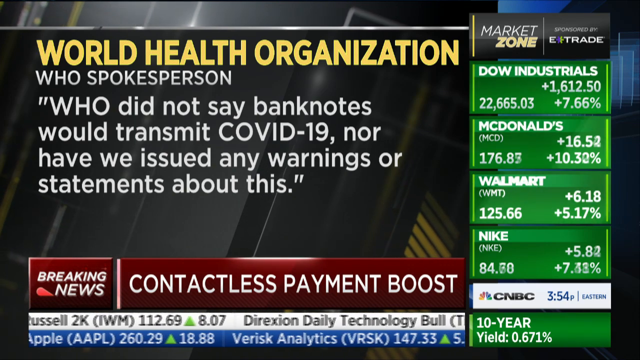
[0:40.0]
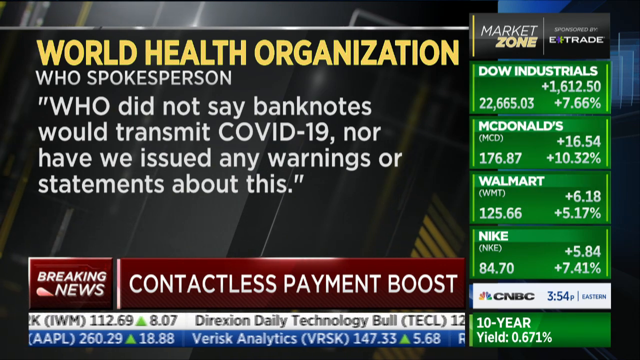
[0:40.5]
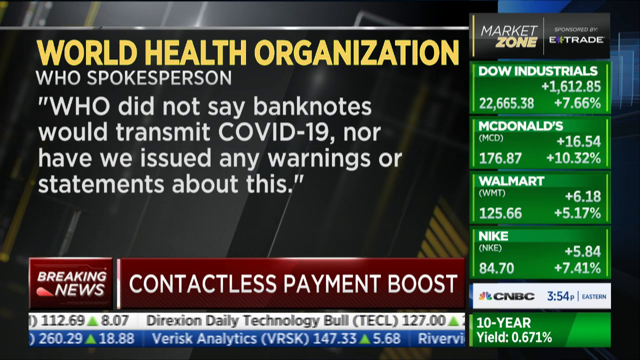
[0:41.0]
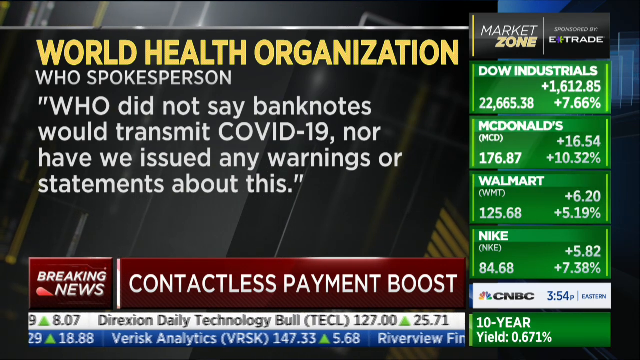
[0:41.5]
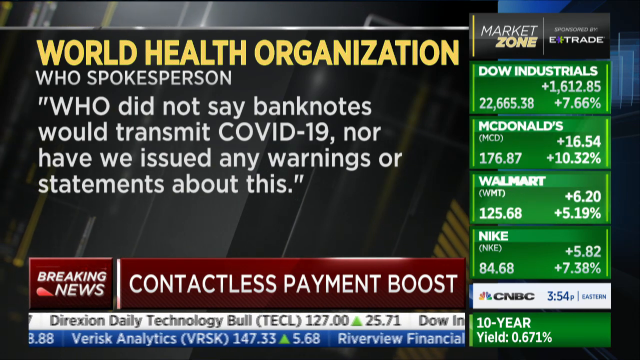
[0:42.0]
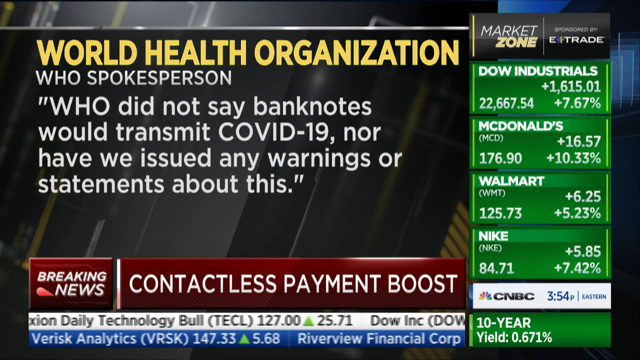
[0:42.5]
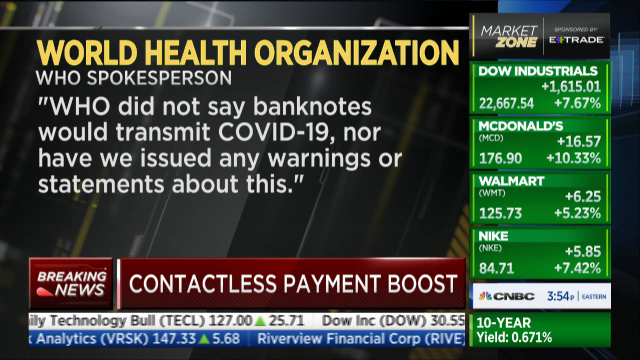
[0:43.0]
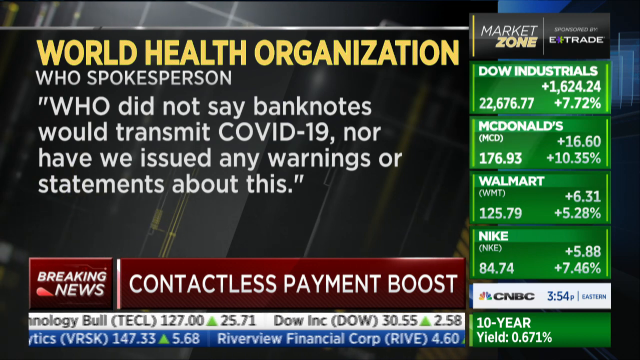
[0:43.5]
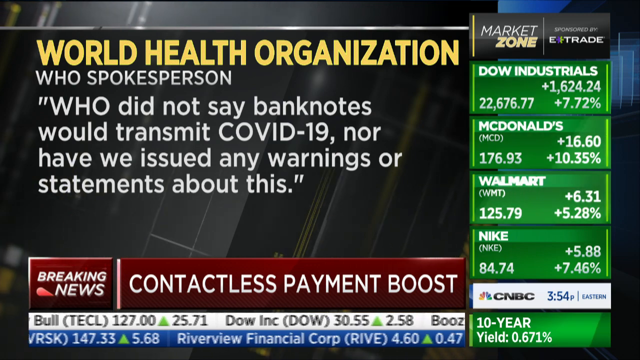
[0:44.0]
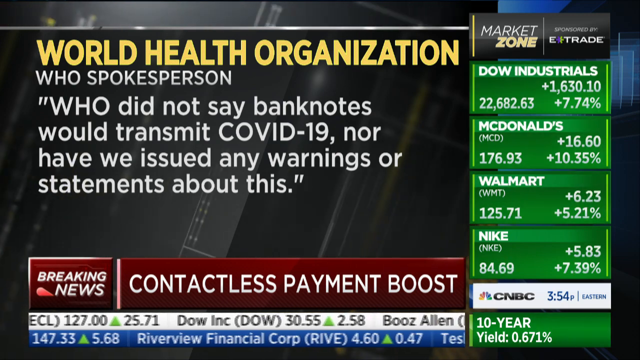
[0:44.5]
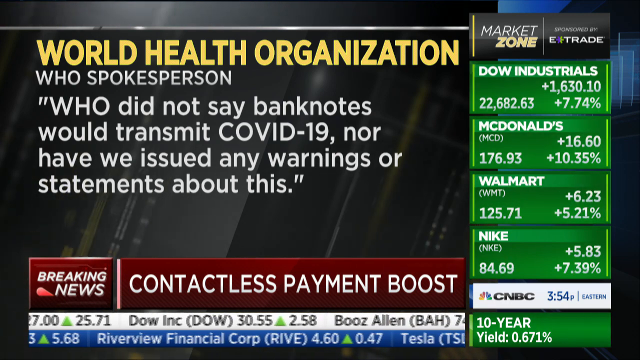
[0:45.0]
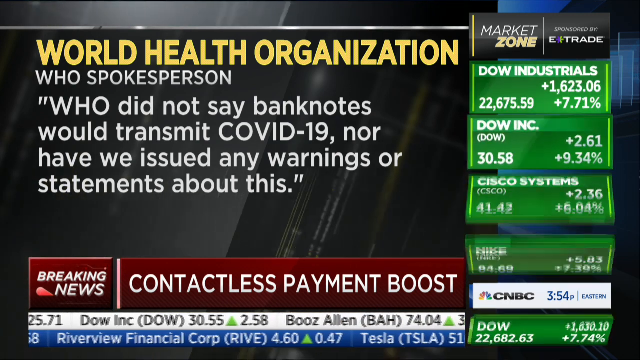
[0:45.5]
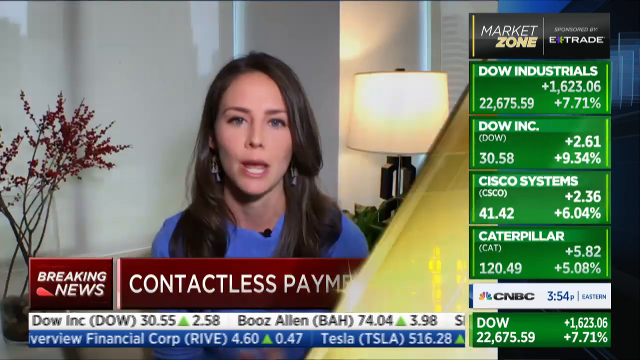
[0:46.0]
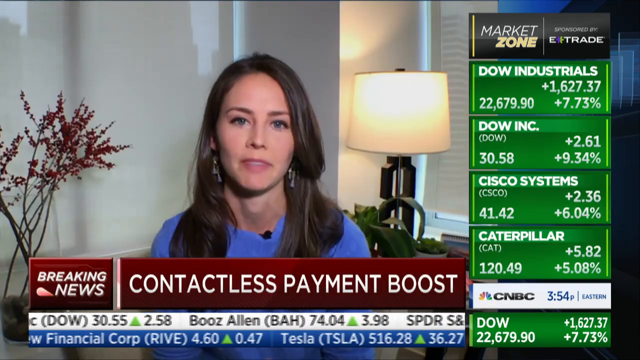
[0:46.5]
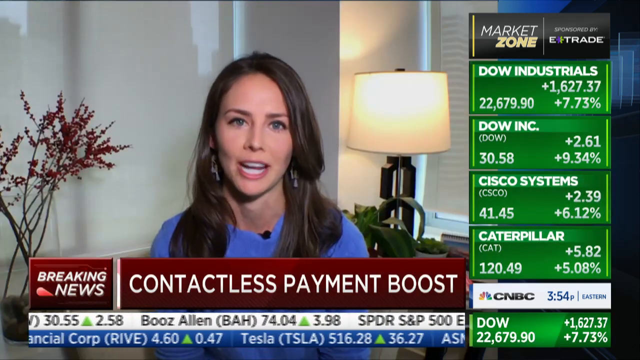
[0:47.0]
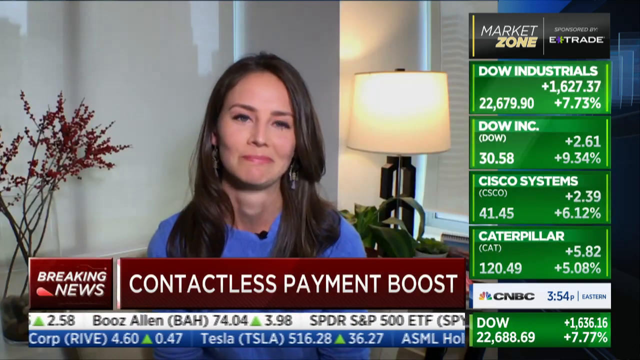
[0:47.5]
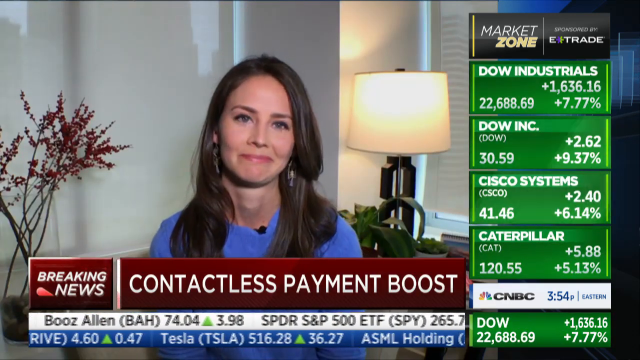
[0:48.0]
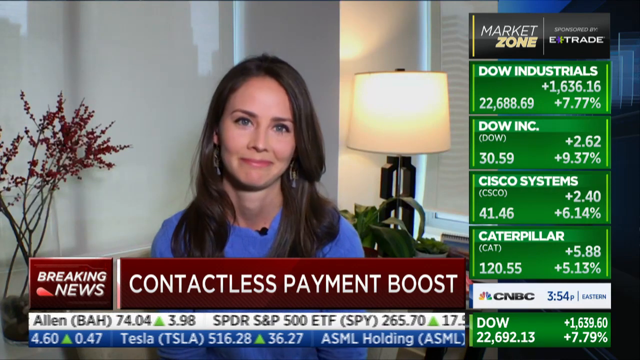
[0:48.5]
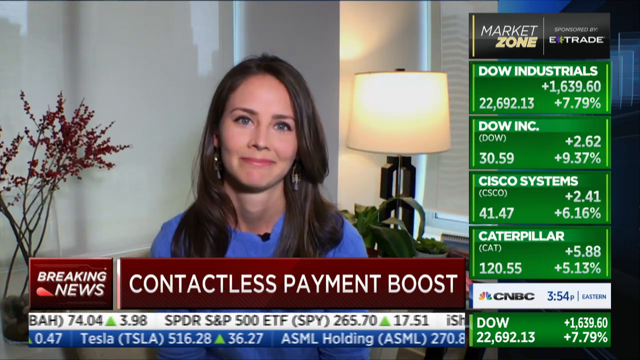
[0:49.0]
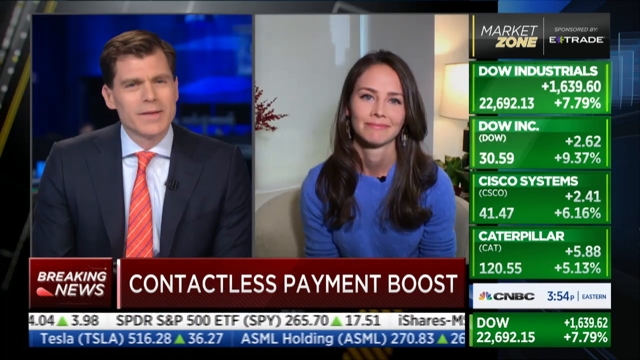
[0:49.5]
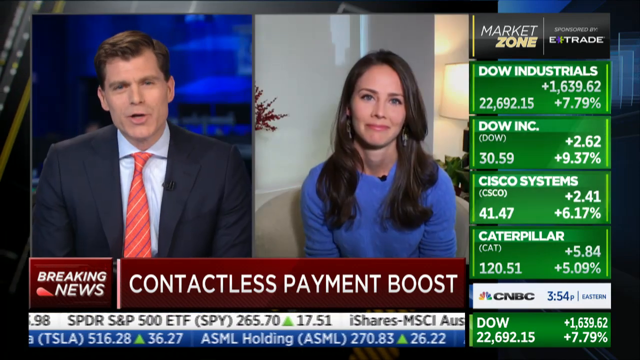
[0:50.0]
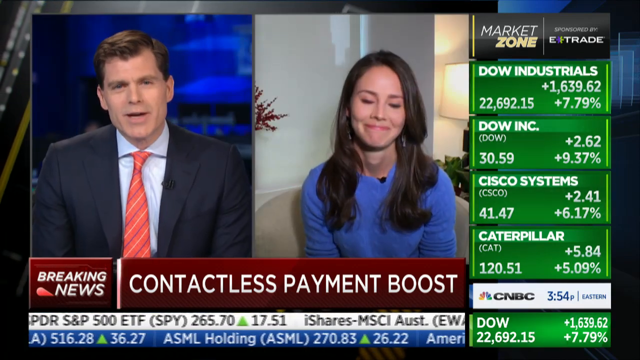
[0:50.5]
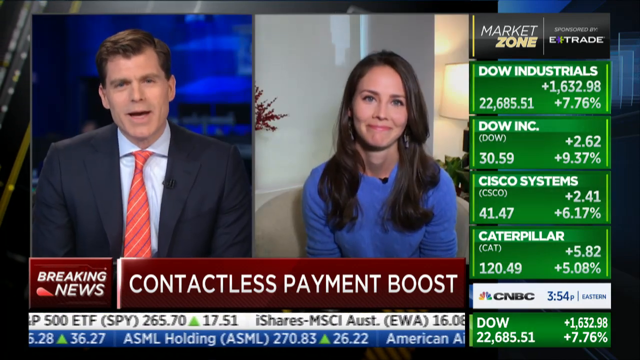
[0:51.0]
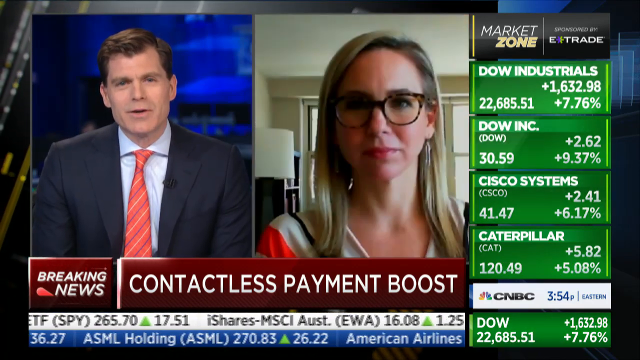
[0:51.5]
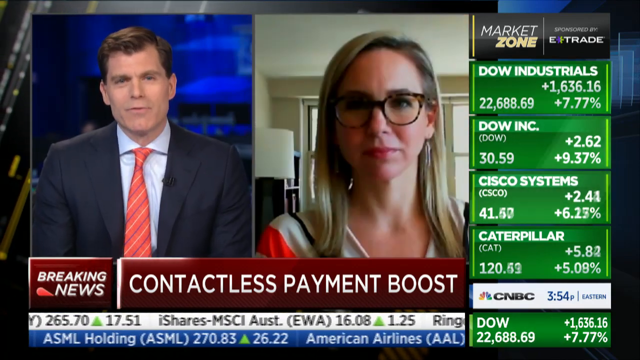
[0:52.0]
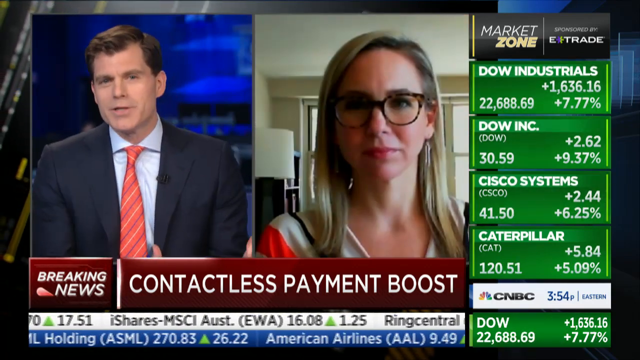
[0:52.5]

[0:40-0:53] The screen shows "WHO spokesperson" and the quote "WHO did not say banknotes transmit COVID-19 nor have we issued any warnings or statements about this." On the far right side is a horizontal green strip showing the day's market news, listing the Dow, McDonalds, Walmarts and Nike stocks. At the bottom it reads "breaking news, contactless payments boost", and at the very bottom a ticker of stock news for the day moves from right to left. The scene quickly changes to a white woman about 40 years old with dark brown to black hair, wearing a long blue sweatshirt, talking to the camera and smiling. Behind her is a big, lit, white lamp, and to her left is a bunch of flowers that look like cherry flowers, slightly bright pink, in a flower pot. She talks passionately to the camera, replying to questions from the news studio, and is seen nodding her head in agreement. At the very bottom of the screen, stock market numbers move from right to left. The scene quickly changes again to another white woman being interviewed by the gentleman in the studio; he is wearing semi-square glasses, with long blonde hair.